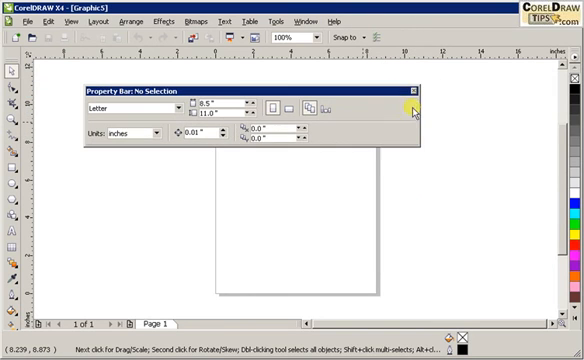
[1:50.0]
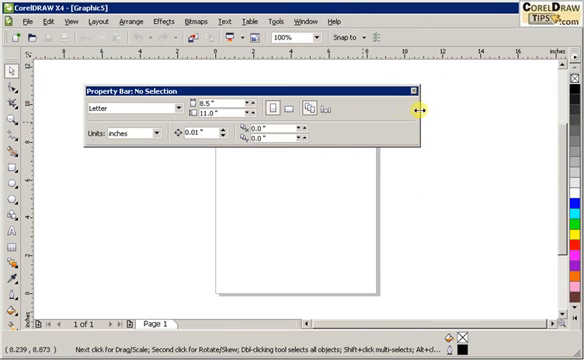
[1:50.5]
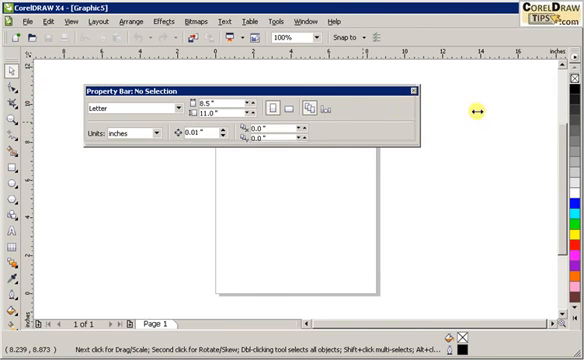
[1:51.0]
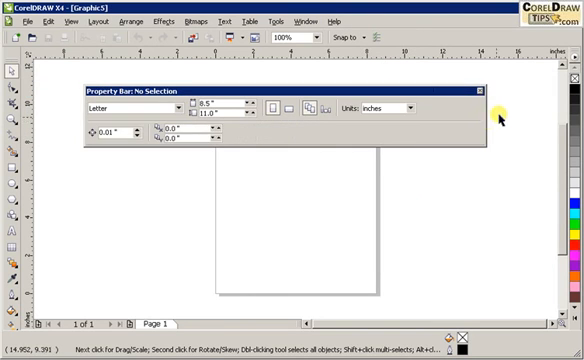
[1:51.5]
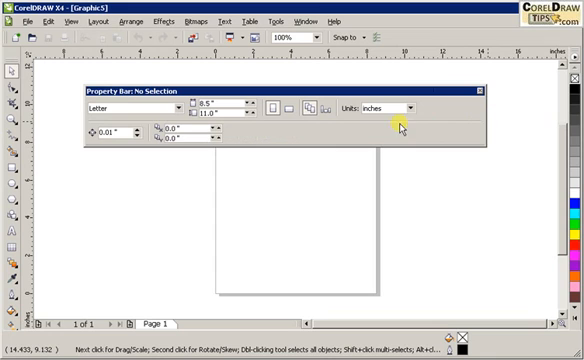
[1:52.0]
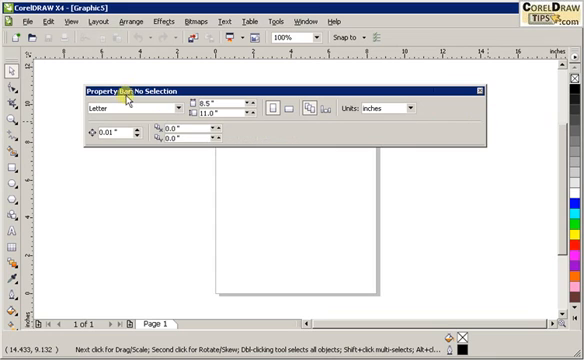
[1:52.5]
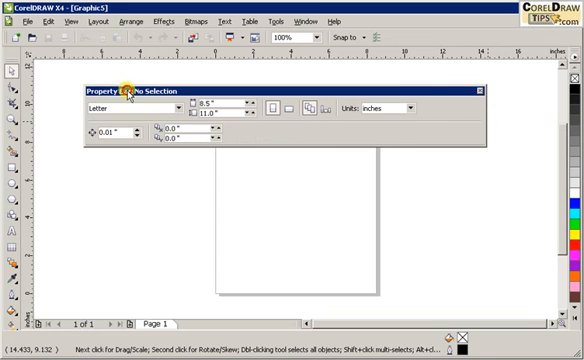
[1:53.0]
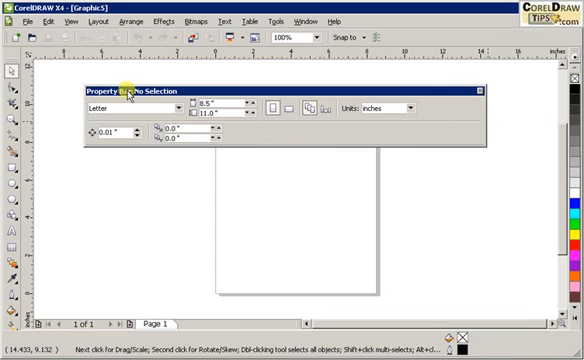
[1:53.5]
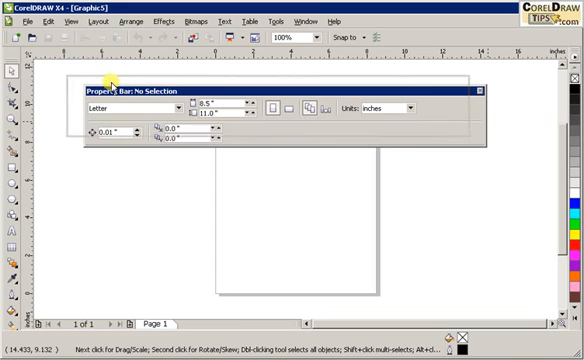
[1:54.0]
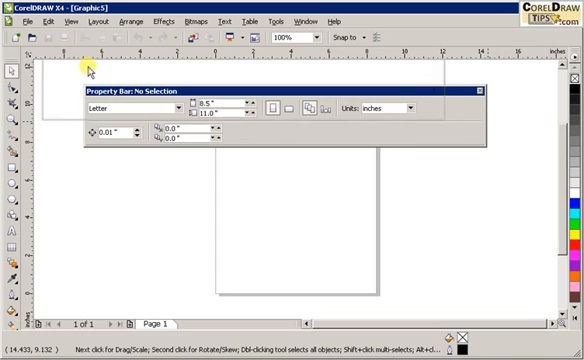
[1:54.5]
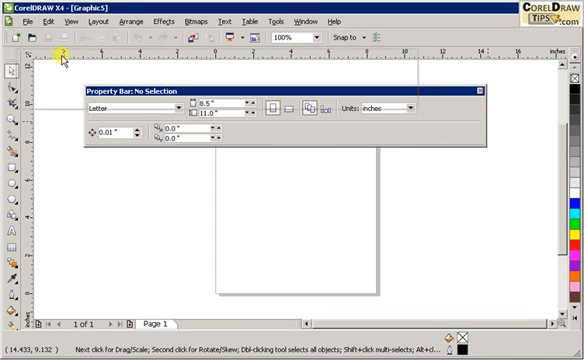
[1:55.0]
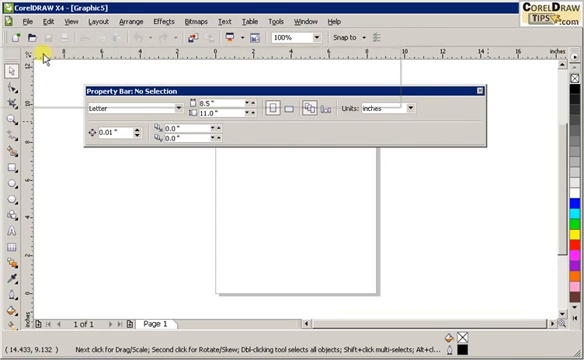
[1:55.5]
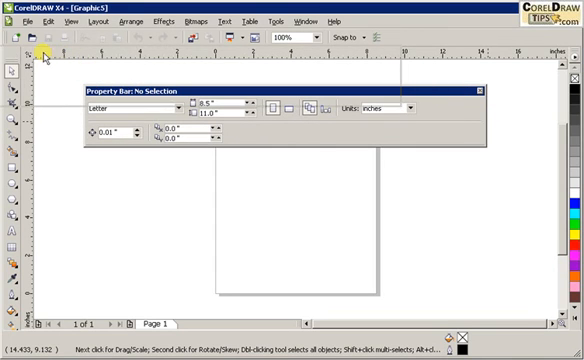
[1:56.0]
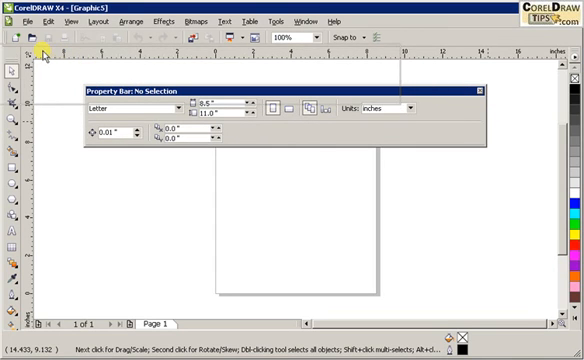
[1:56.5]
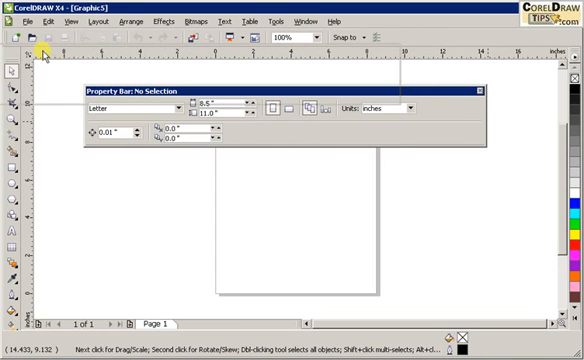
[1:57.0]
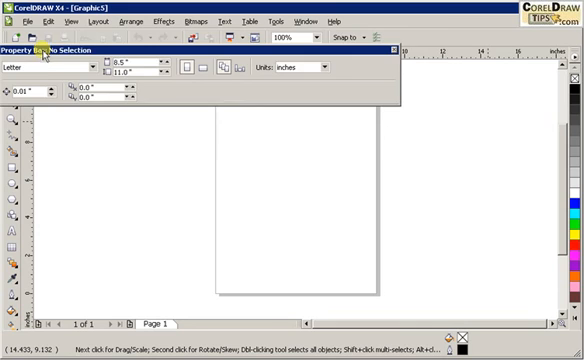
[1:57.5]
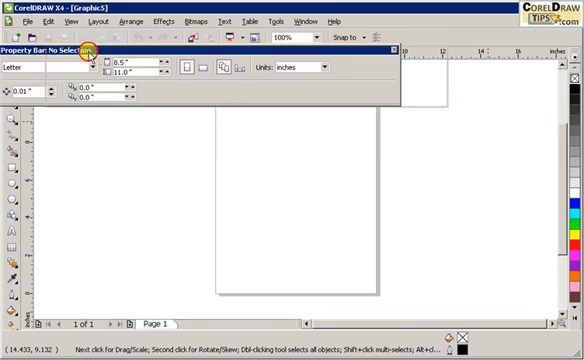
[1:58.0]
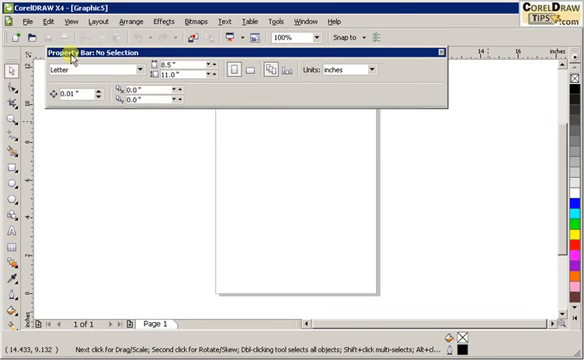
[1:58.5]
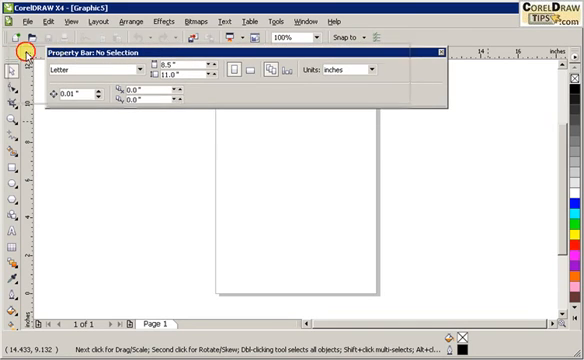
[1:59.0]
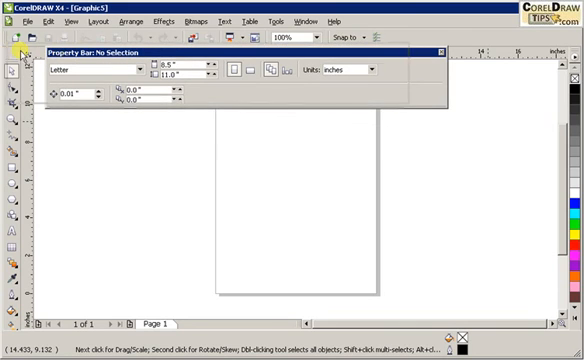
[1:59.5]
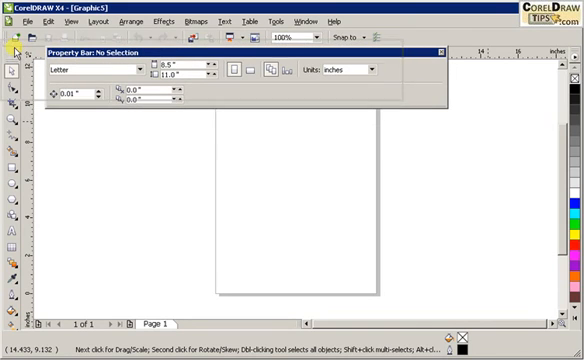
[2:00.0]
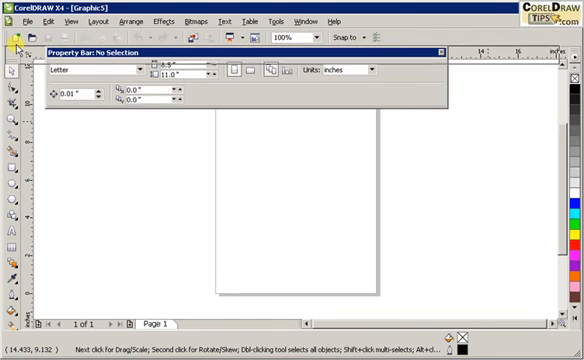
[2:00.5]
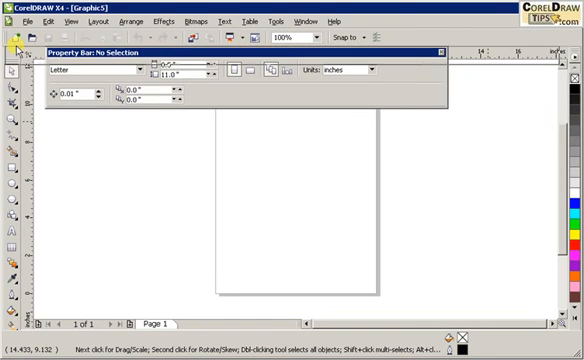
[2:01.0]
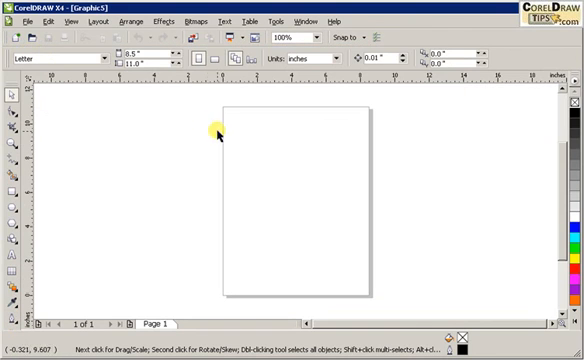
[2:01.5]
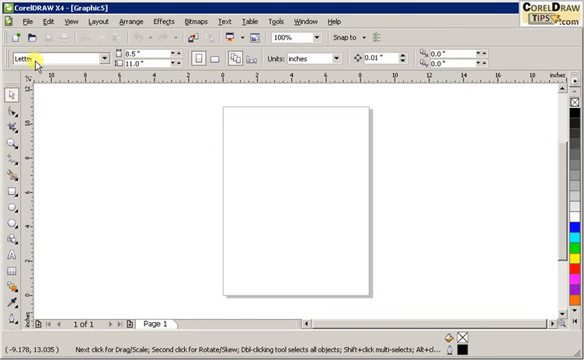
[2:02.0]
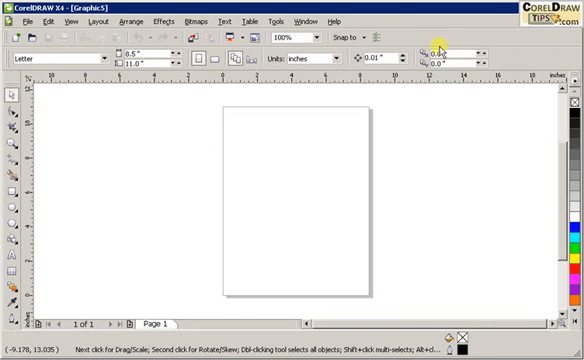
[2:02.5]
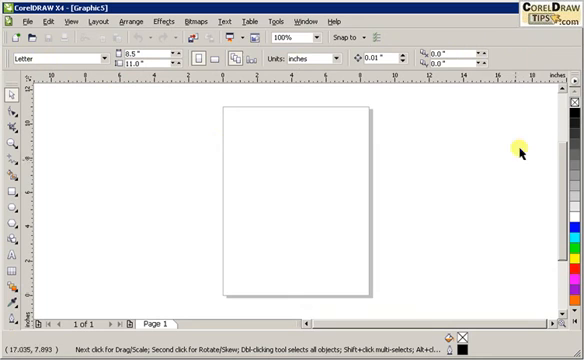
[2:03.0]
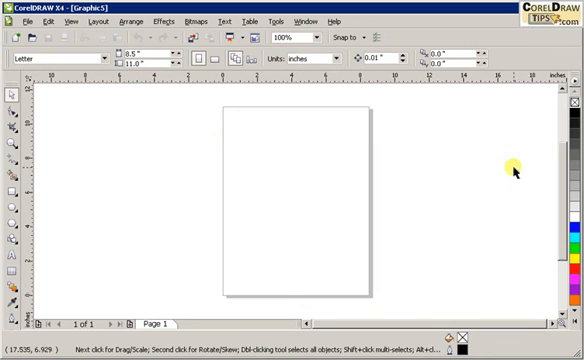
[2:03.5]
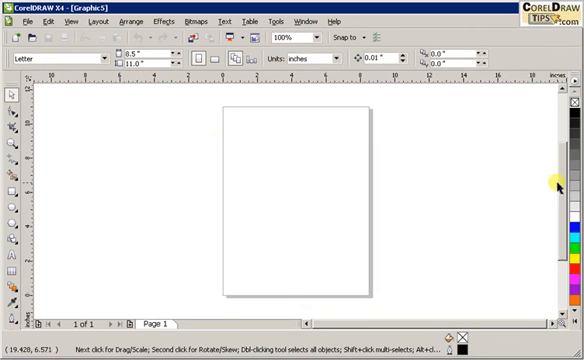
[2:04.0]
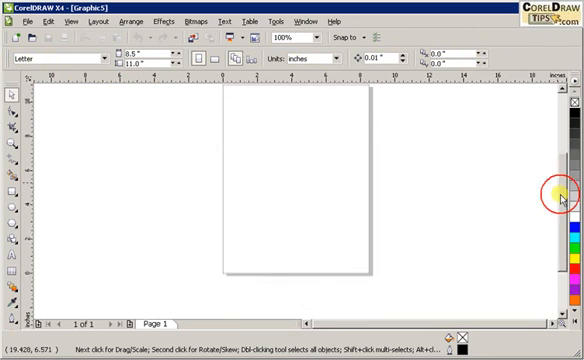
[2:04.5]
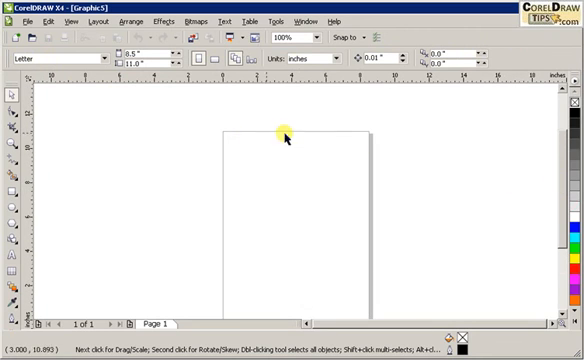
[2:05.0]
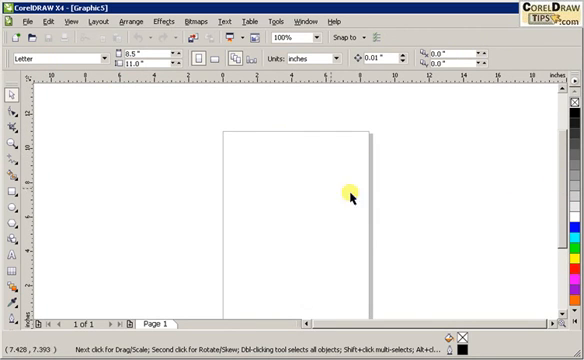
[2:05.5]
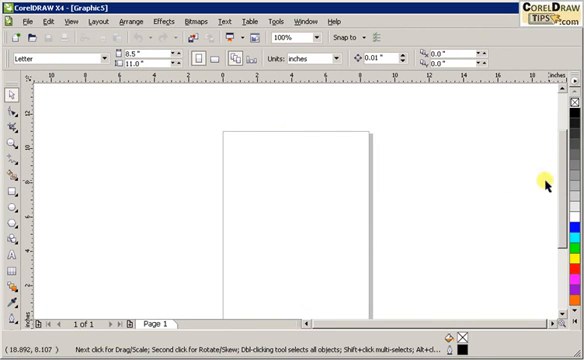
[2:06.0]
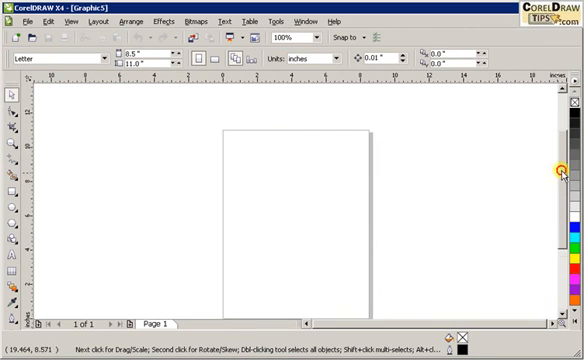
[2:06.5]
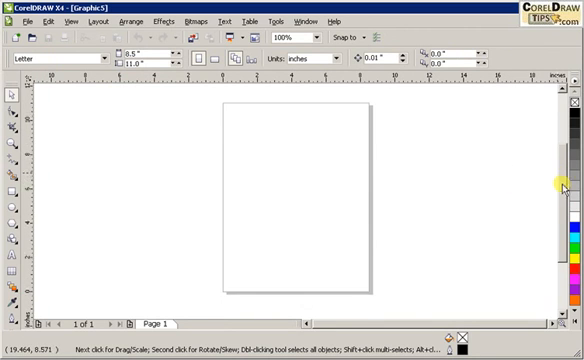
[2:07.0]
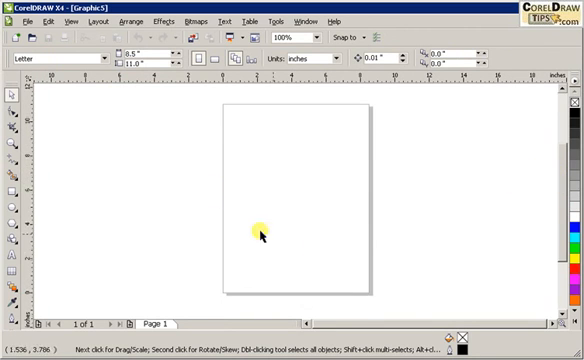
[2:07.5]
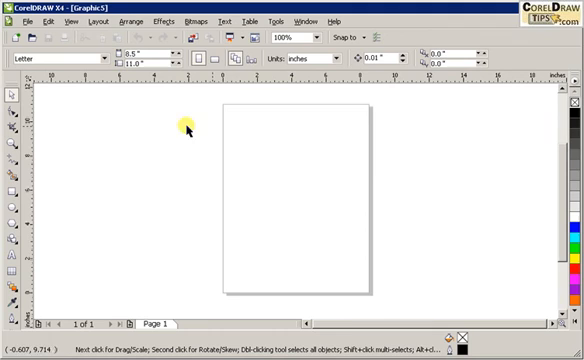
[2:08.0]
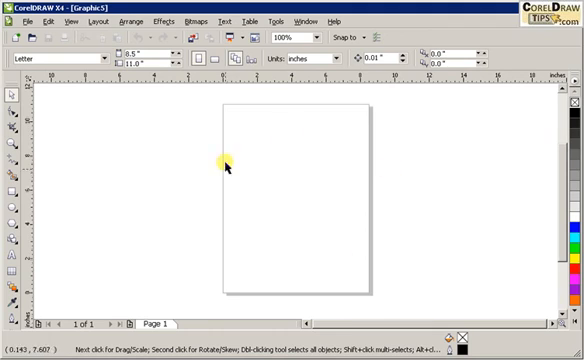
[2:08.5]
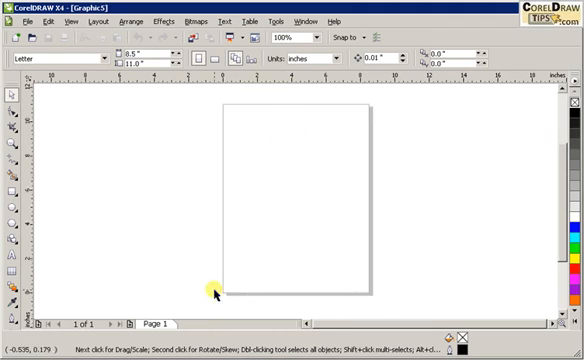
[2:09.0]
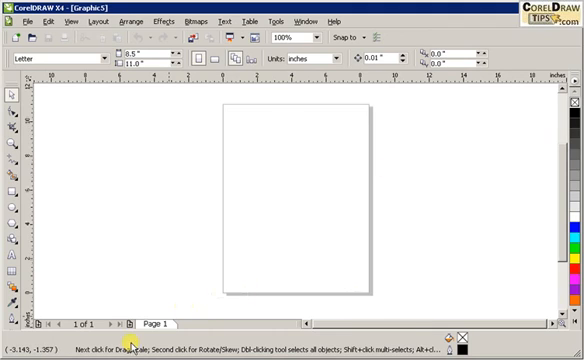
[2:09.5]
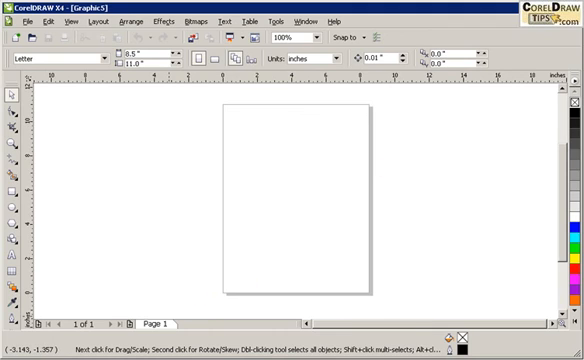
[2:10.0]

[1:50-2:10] Across the top of the blank document page, from the left to right of center, is a bar titled "Property Bar, No Selection". The cursor starts on the right-hand side of it, just below the top bar and just below the X in the corner that would close it. It clicks on the outside line and extends the bar further. The cursor then clicks the top bar and moves it further up and to the left, all the way to the left, brings it back in, then moves it all the way to the left again and leaves it there on the outside of the toolbars. The cursor returns to the middle of the screen, moves along the top across the property bar where the letter option is, from left to right, then comes down the side near the scroll bar. The scroll bar is moved down, showing that the white document insert within the document can be moved down a page.